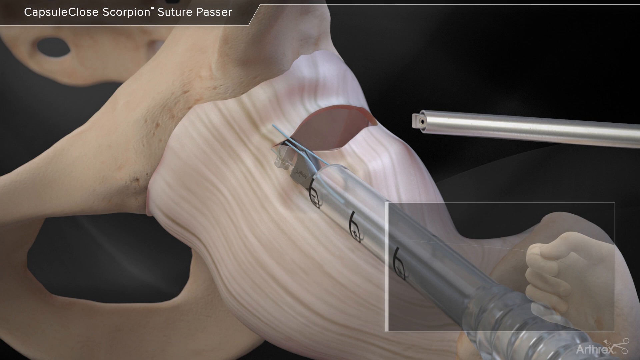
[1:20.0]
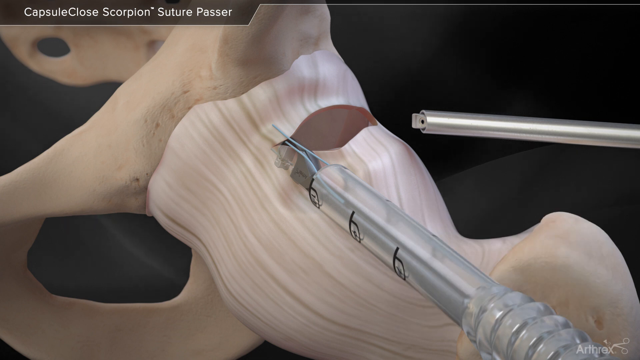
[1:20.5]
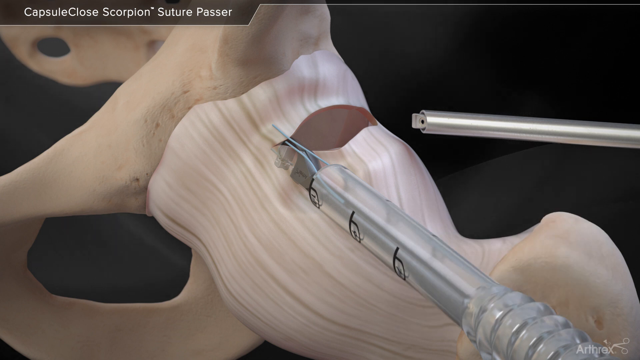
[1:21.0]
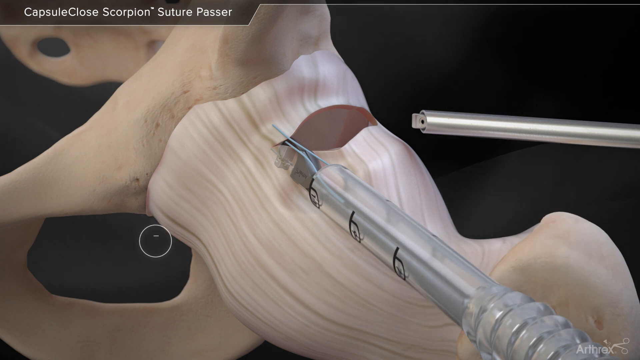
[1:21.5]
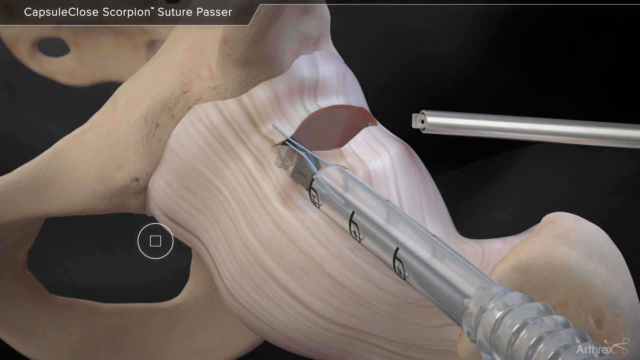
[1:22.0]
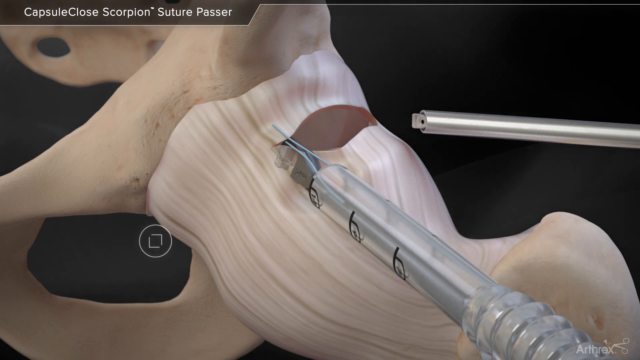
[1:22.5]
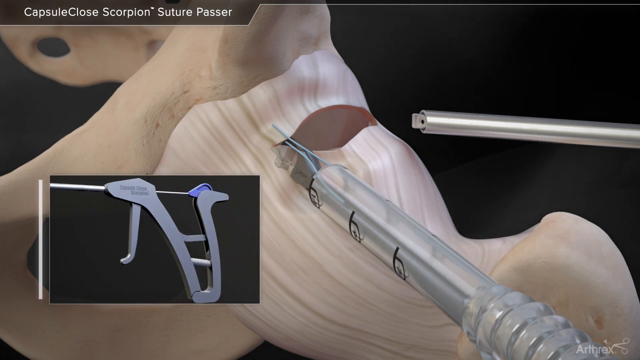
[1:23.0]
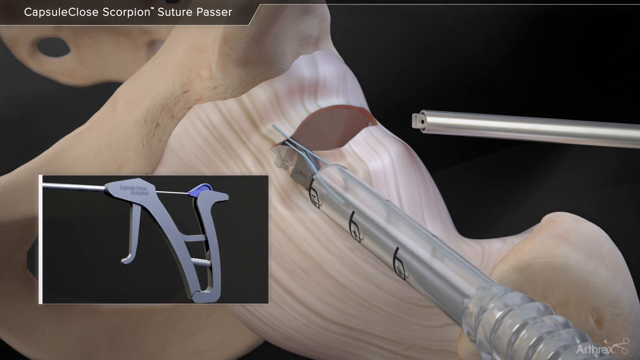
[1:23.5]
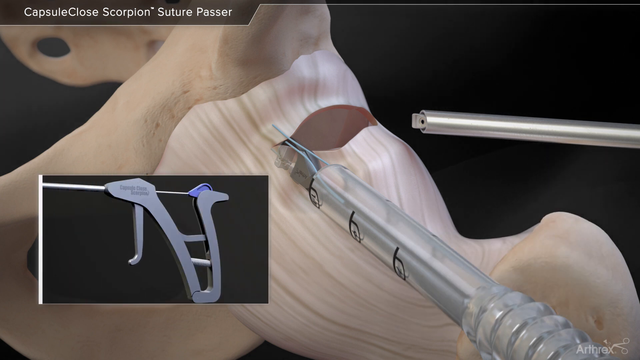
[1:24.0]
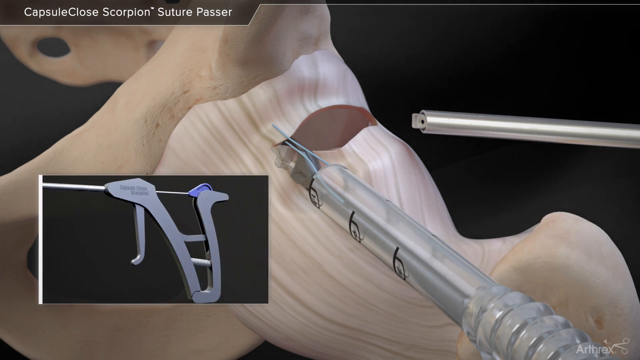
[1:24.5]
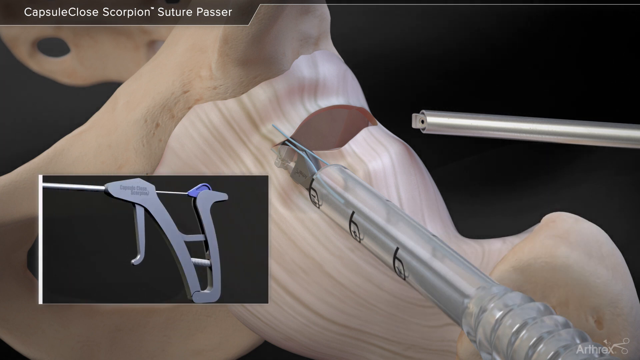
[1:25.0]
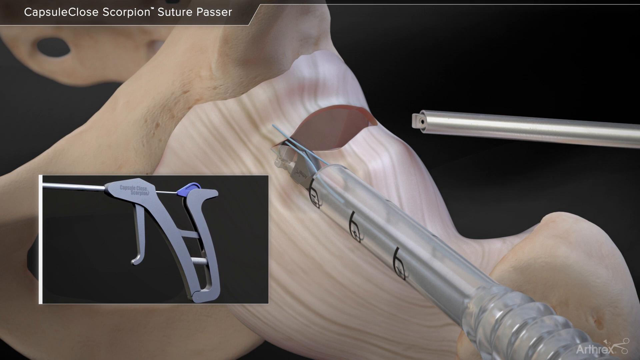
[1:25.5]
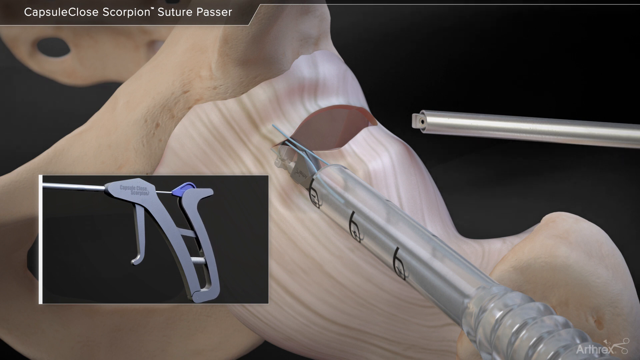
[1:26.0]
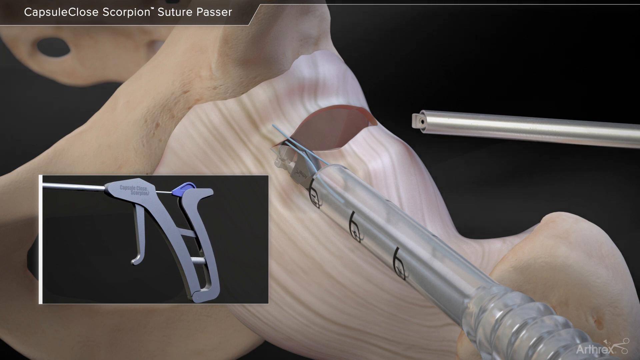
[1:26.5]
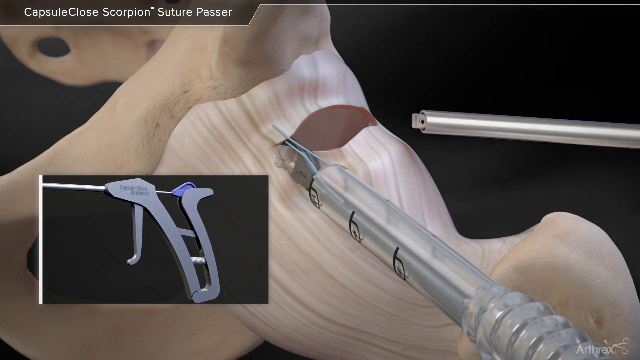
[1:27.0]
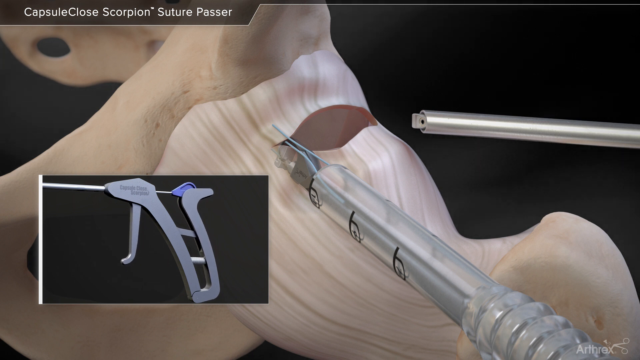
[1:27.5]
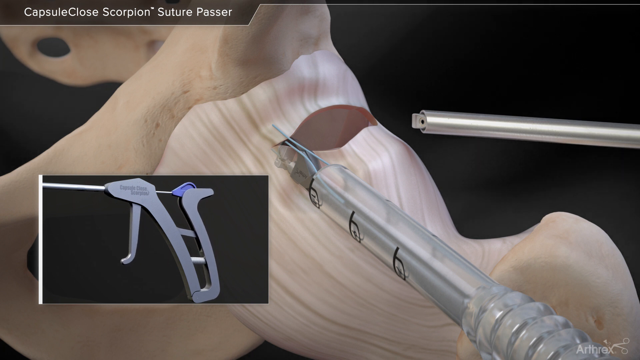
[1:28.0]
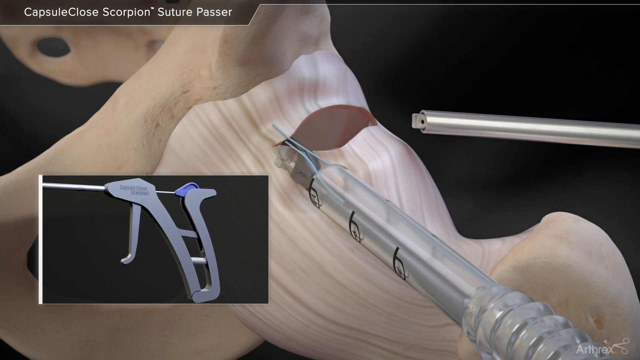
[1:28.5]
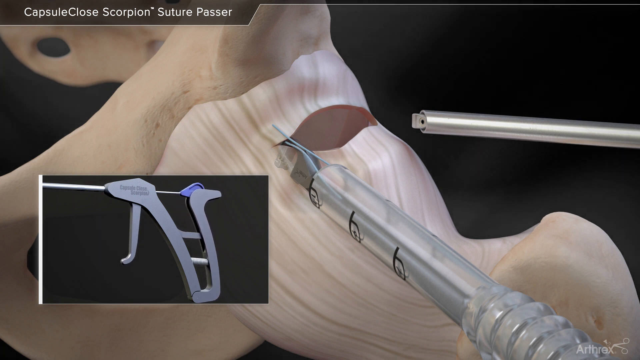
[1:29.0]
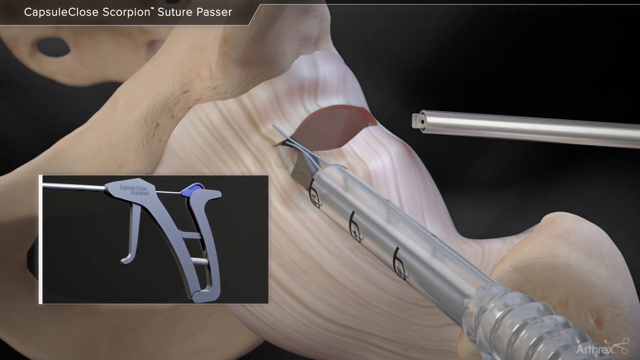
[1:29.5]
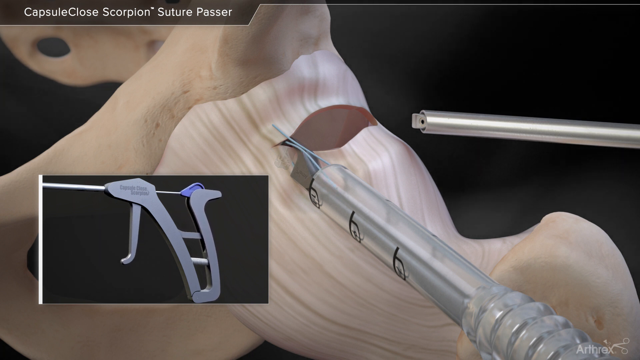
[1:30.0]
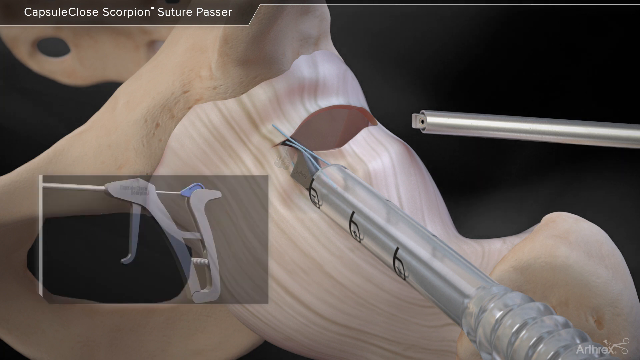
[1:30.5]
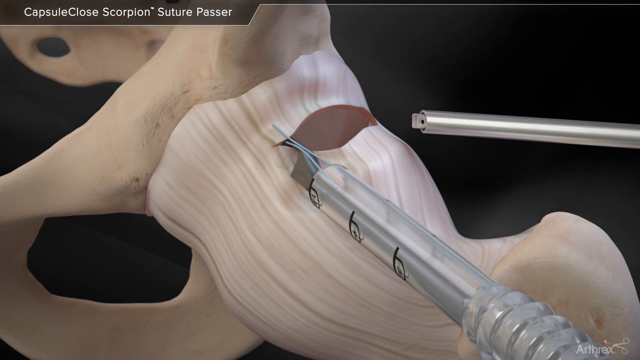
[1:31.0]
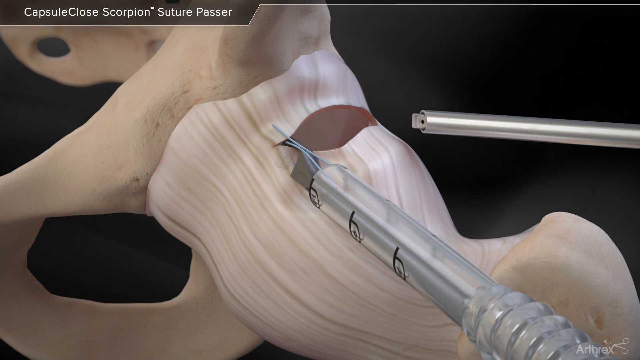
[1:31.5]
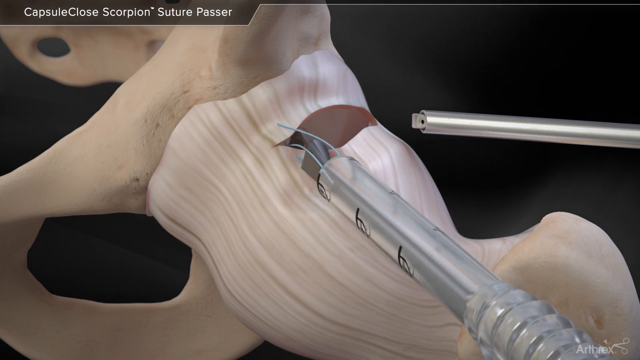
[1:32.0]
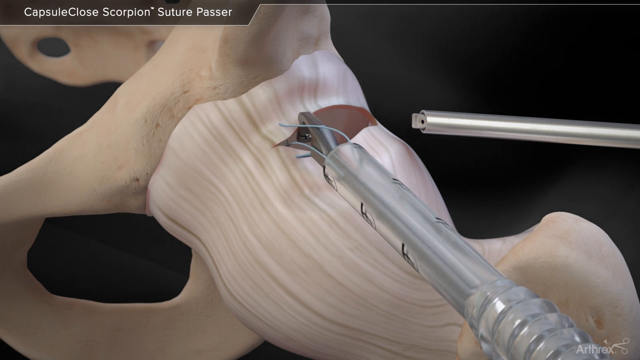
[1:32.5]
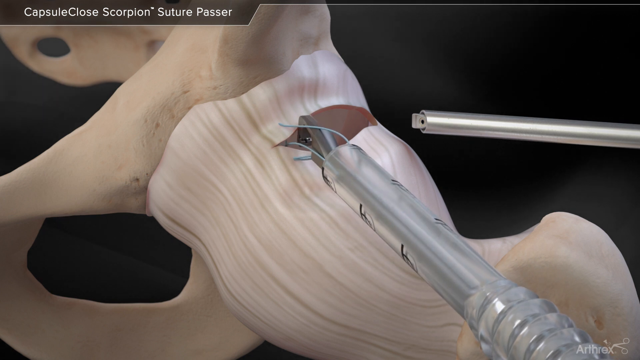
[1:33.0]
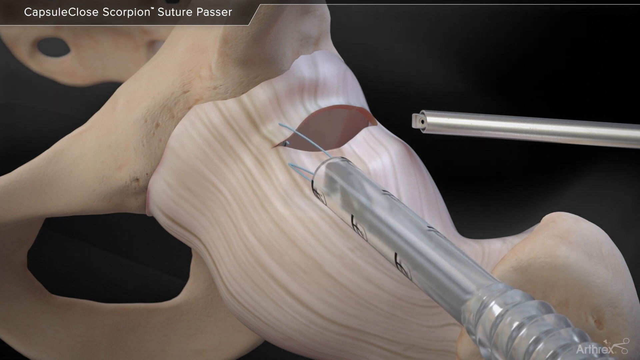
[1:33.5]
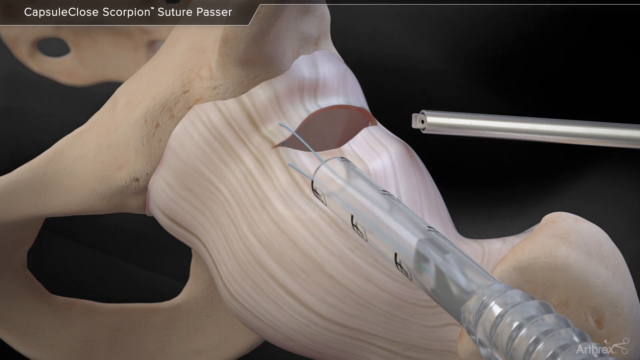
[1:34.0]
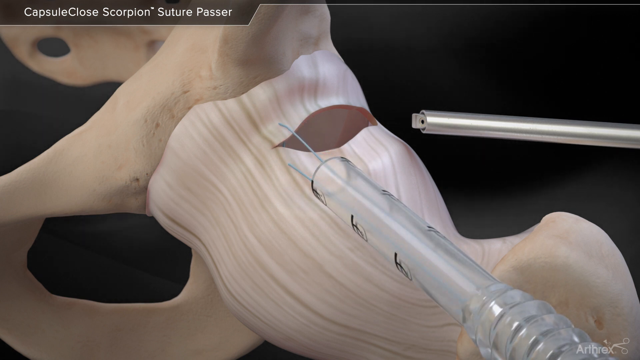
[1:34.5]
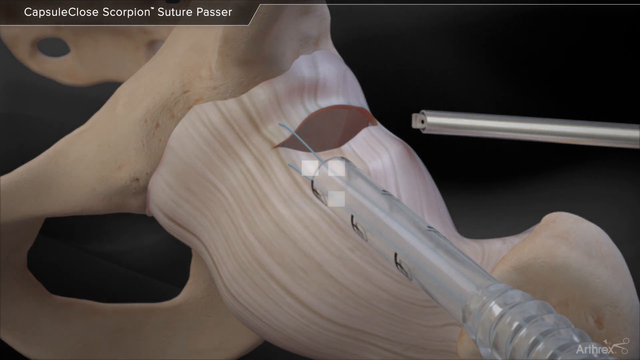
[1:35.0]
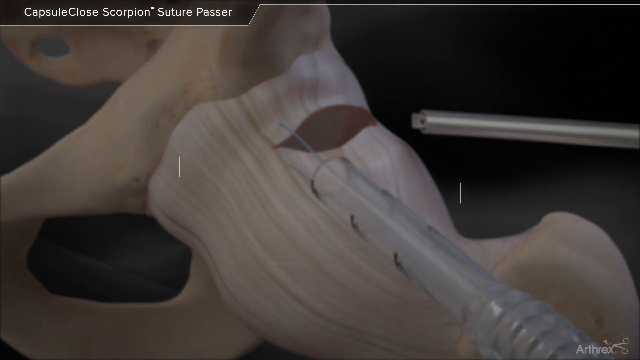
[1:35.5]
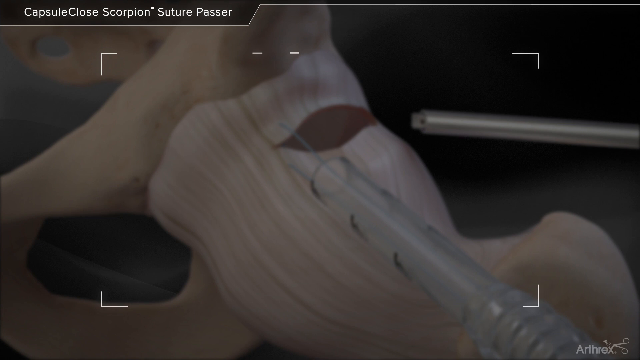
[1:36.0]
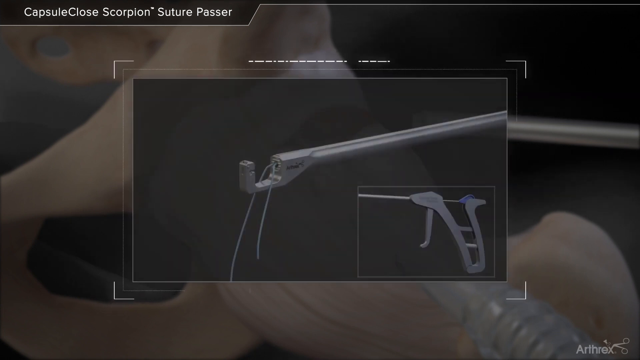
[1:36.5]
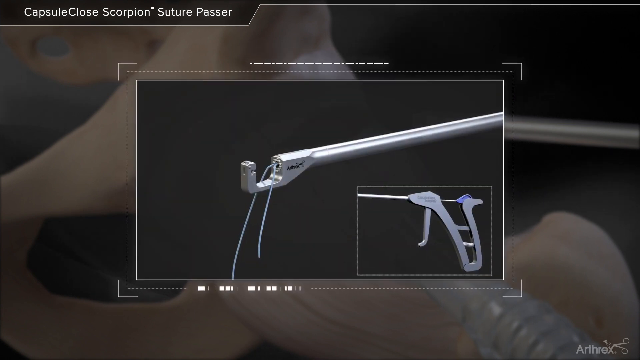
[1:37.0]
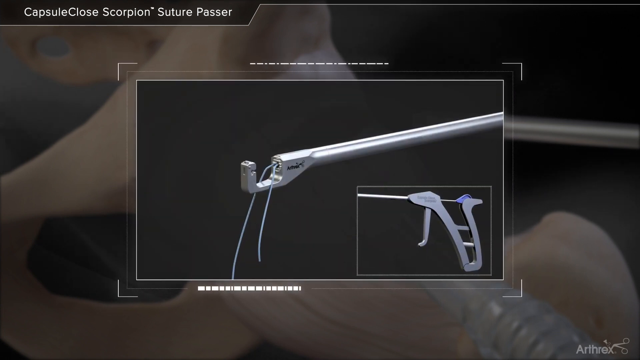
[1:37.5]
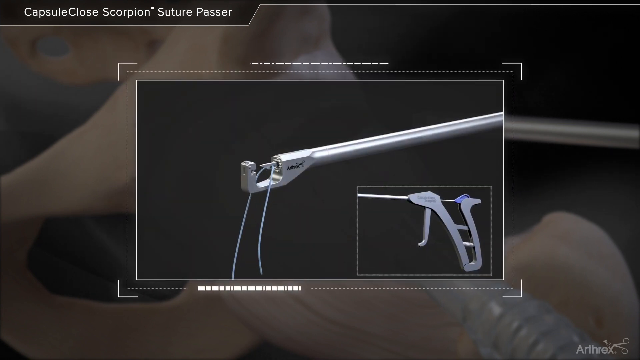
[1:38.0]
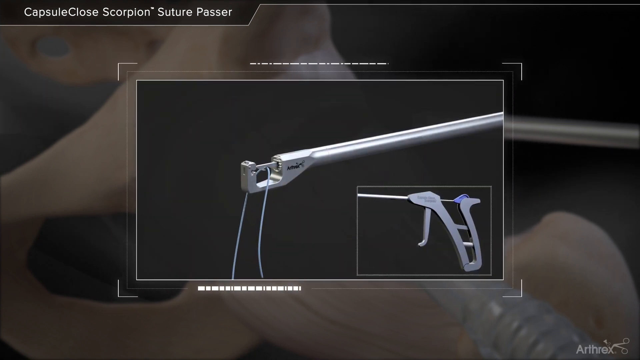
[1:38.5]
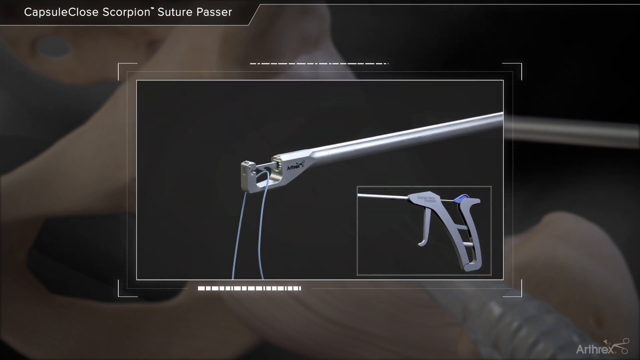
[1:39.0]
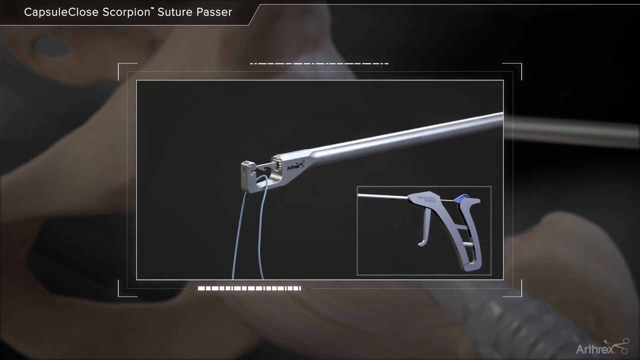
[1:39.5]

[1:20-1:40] Two tubes are shown. One has a long end, resembling an ear-piercing tool or a hot glue gun but with a much longer, thinner tip. The other looks like it could be the tube of a needle; it is clear with black strips on it. The view keeps zooming in on this part. The hook loop appears to be in the one on the left that looks like a needle.